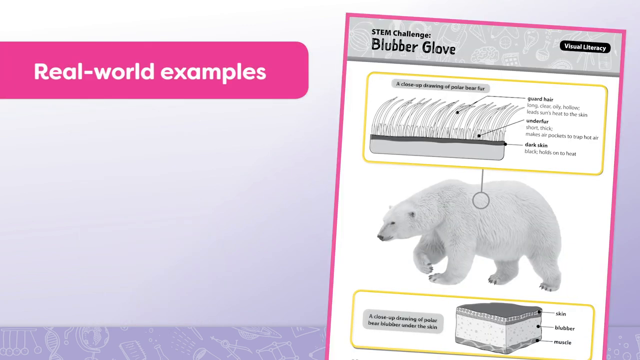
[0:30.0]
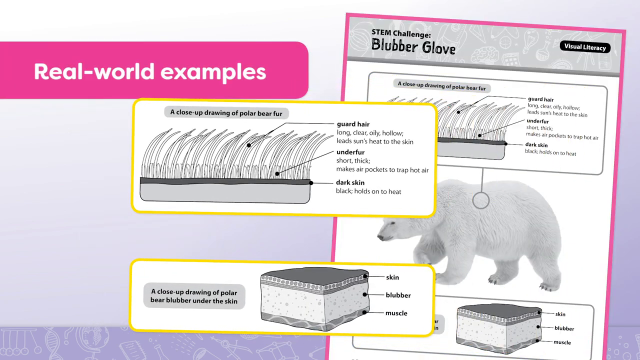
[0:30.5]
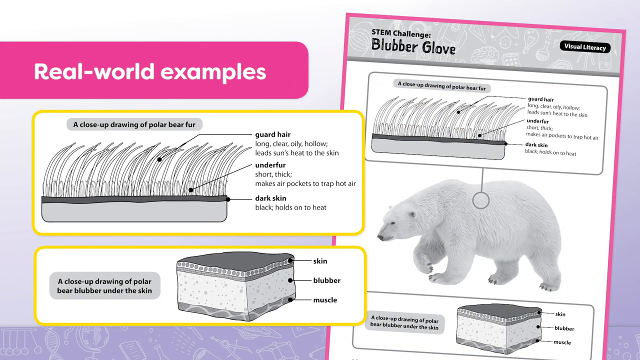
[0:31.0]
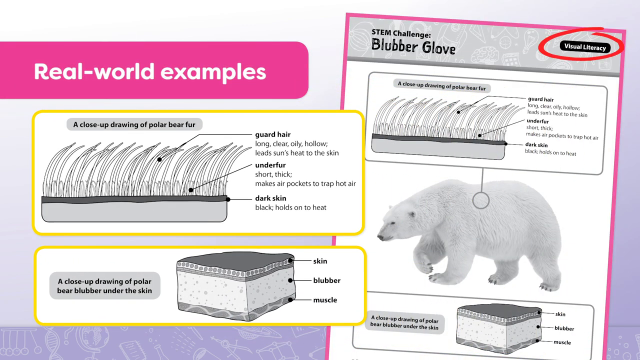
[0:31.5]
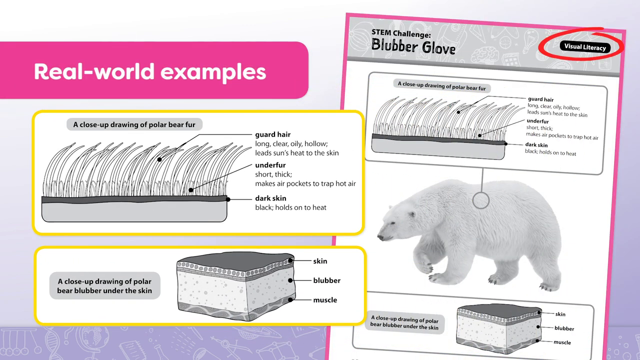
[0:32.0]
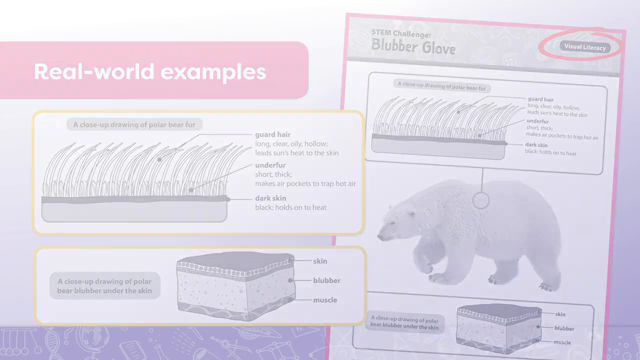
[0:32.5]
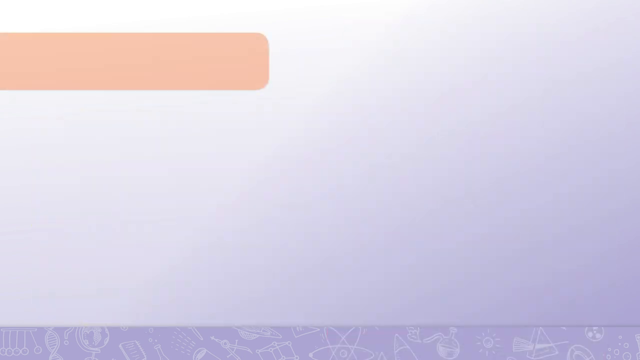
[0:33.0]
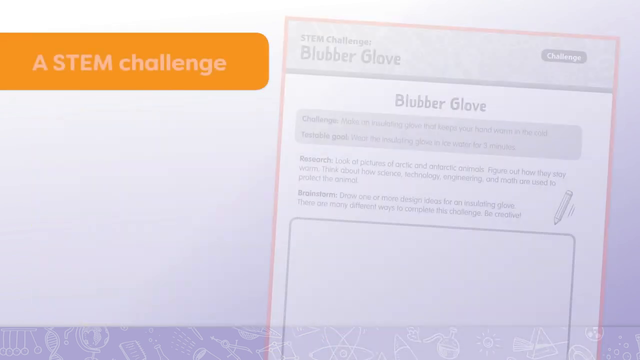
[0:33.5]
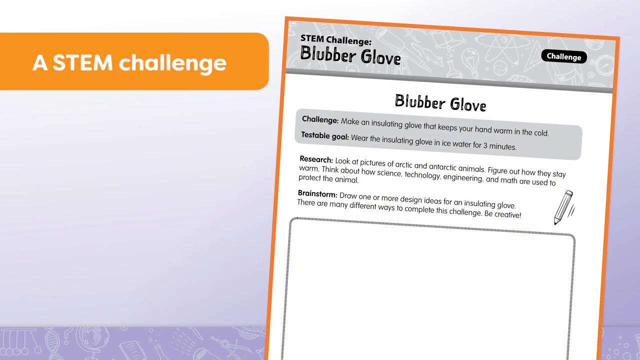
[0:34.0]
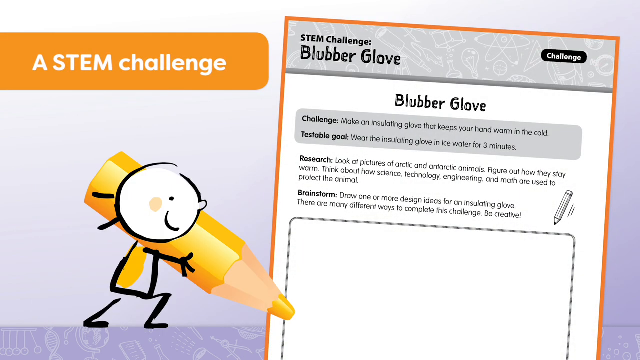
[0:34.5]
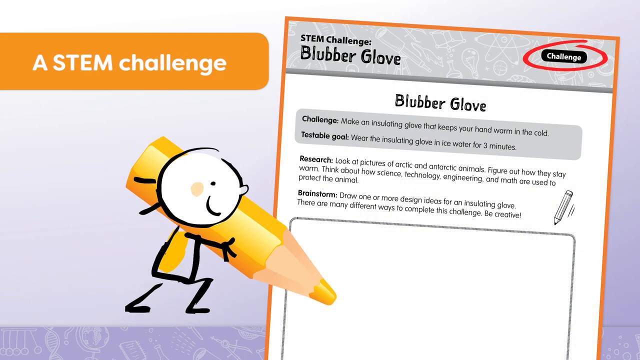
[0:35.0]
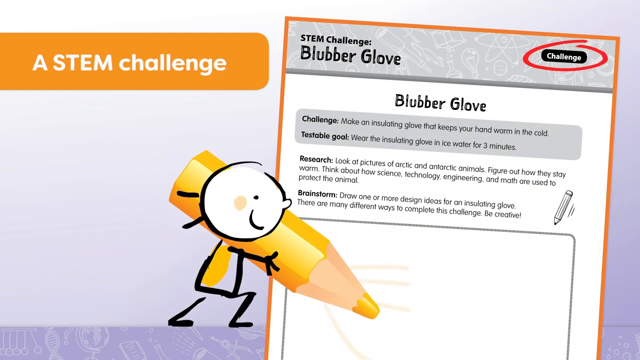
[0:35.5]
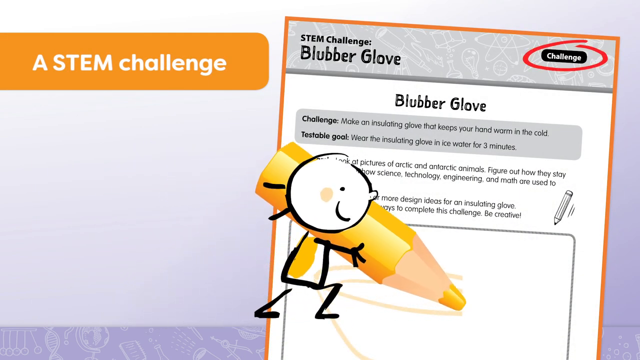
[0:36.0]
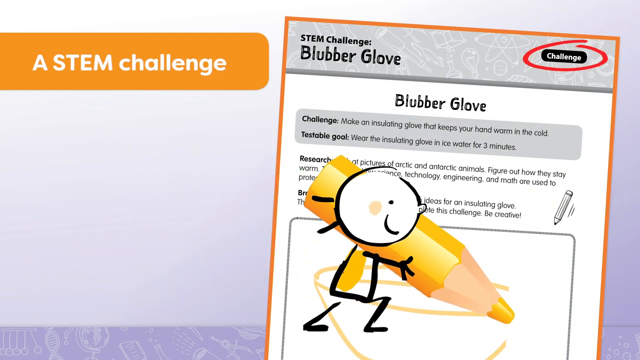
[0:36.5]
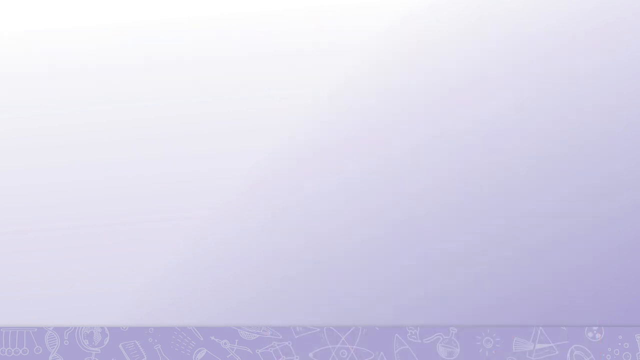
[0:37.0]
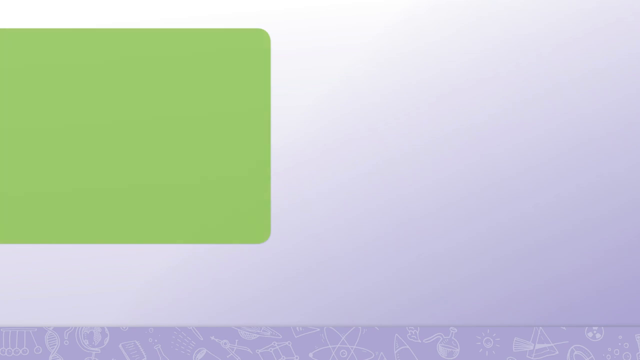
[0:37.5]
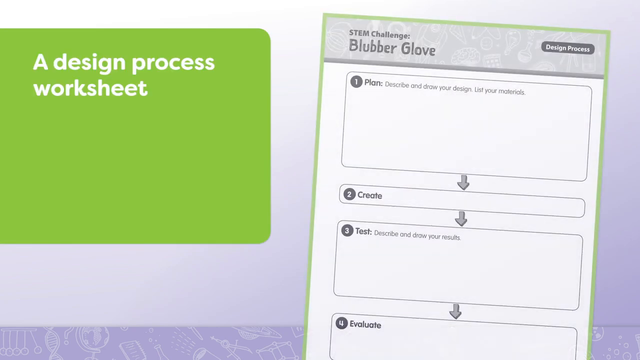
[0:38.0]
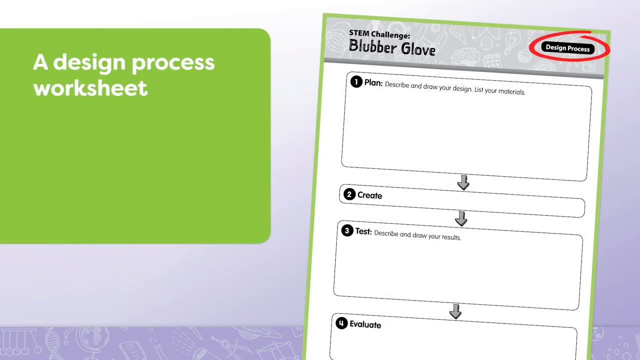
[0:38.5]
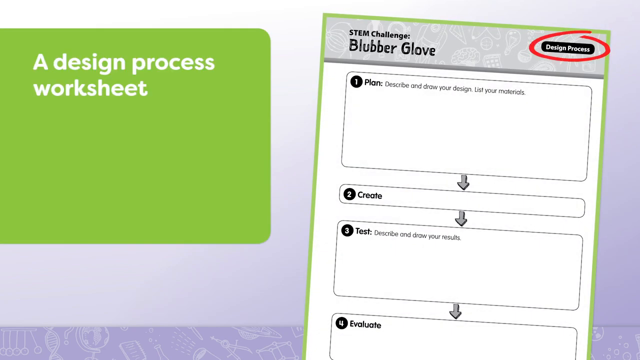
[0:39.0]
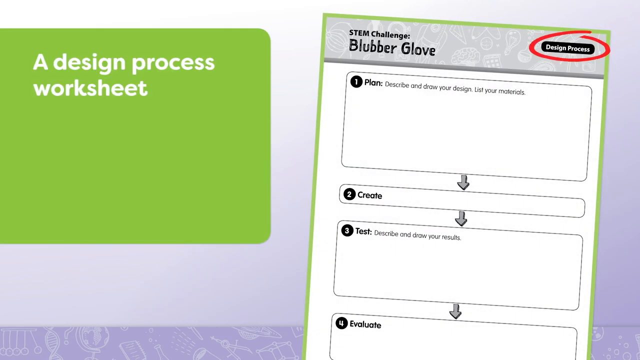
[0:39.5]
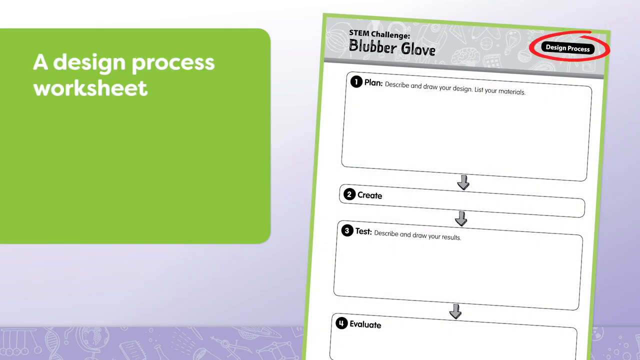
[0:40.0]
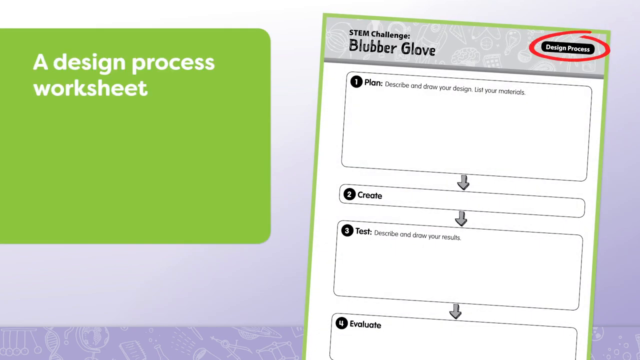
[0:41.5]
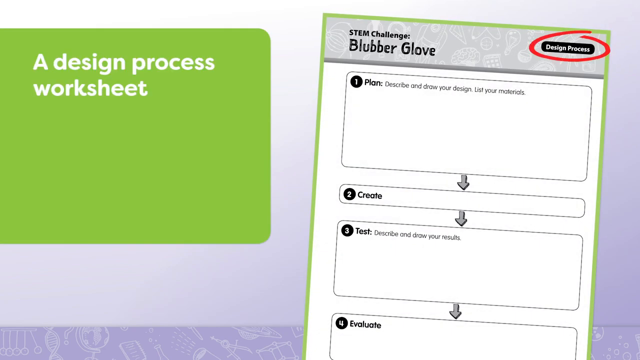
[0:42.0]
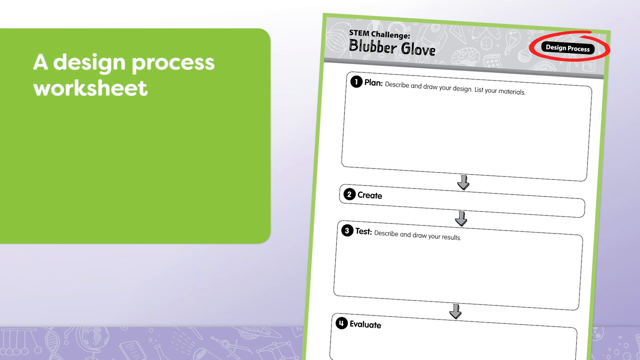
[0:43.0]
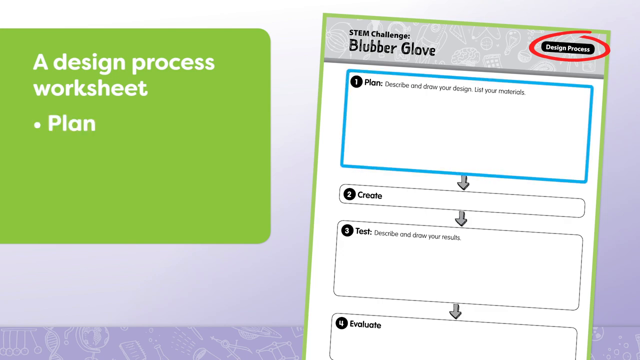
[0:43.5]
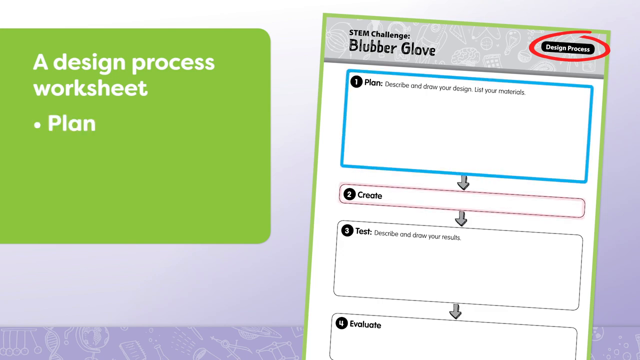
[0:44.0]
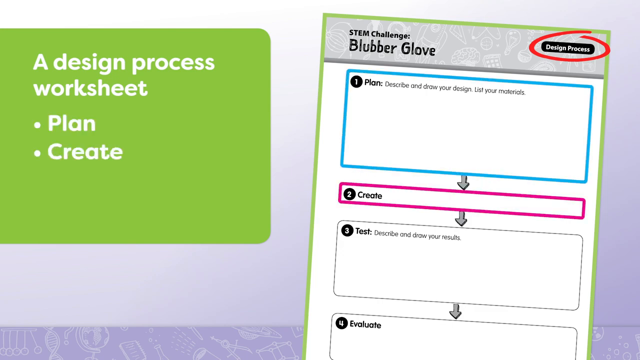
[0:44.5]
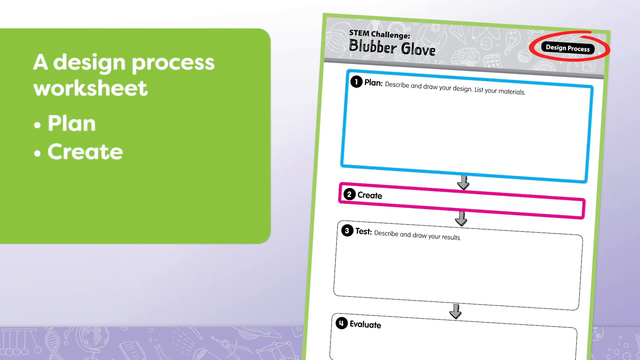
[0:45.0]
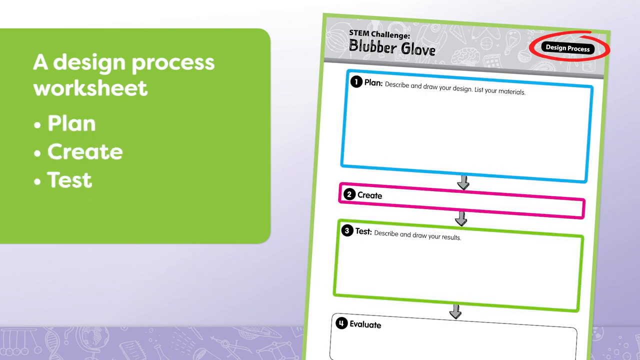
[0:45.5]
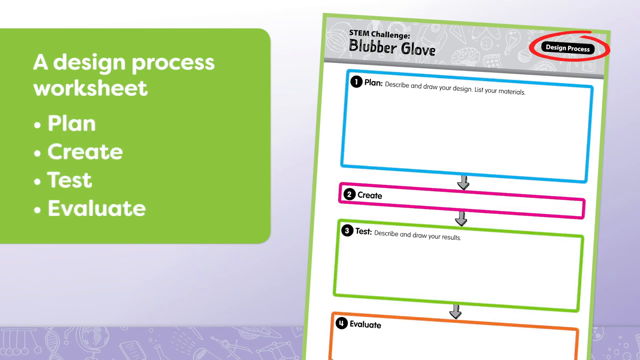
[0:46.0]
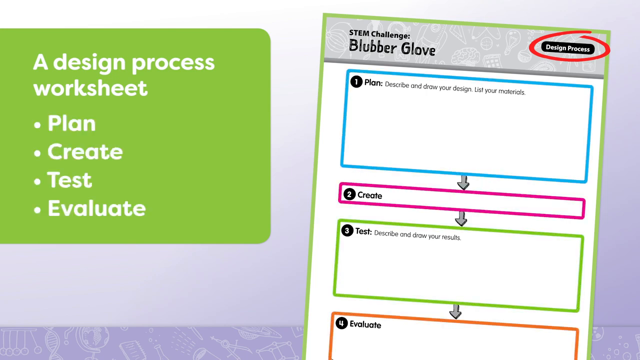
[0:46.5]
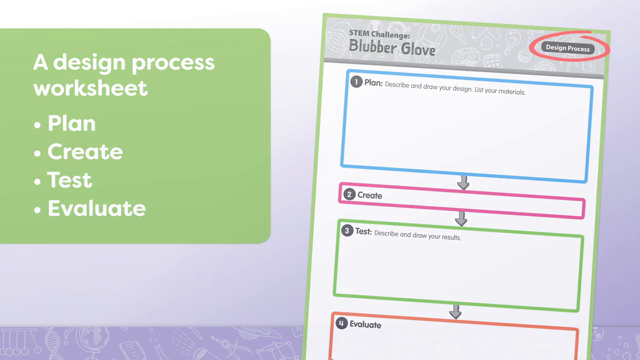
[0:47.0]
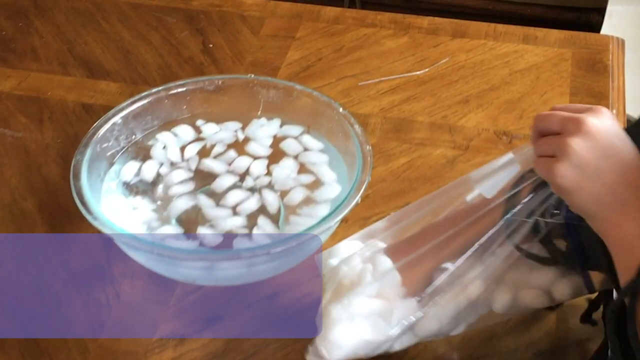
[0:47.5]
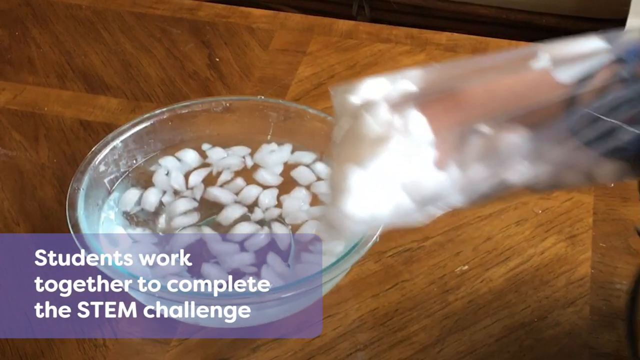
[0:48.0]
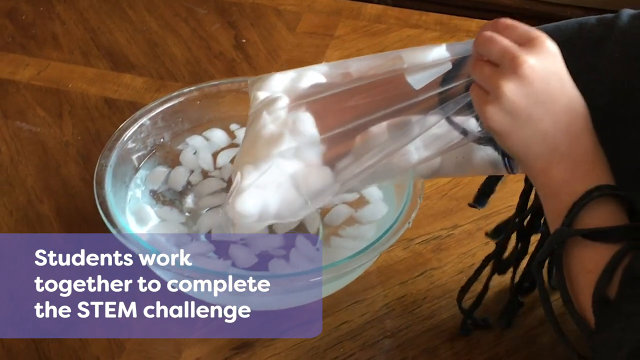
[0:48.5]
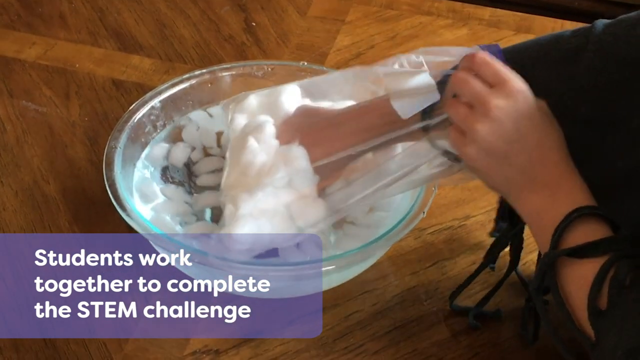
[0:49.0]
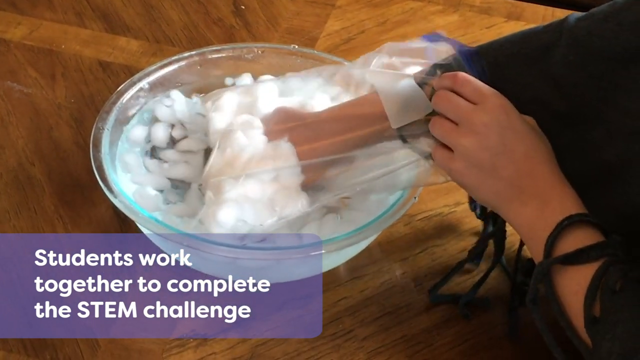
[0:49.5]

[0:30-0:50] The real-world examples continue as two rectangles pop in, identifying tissue and hair elements: on the top, a close-up drawing of polar bear fur, and on the bottom, a close-up drawing of polar bear blubber under the skin. The next slide has the same checklist on the right with "challenge" circled in red. In the top left, a rectangle shows "stem challenge" in white font. A caricature of a little, kind of humanoid figure carrying a yellow pencil faces the checklist and writes on it. On the next slide's checklist, "blubber glove design process" is circled in red. The left side is green, and the top rectangle reads "design process worksheet", followed by four bullets appearing: "plan", "create", "test", "evaluate". The scene then moves to a tabletop with a bowl filled with water, and a rectangle at the bottom left reads "students work together to complete the stem challenge" as a person pours something into the water.